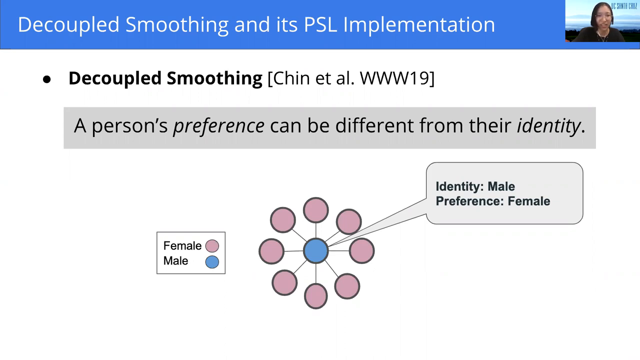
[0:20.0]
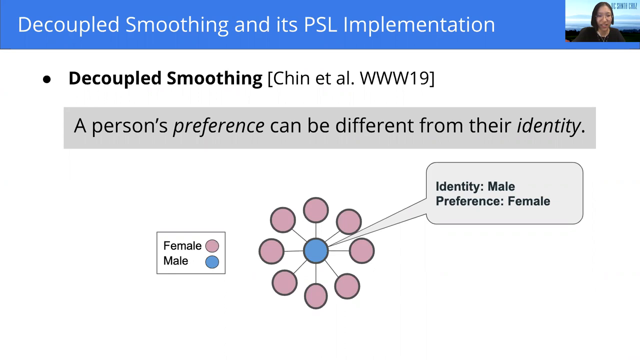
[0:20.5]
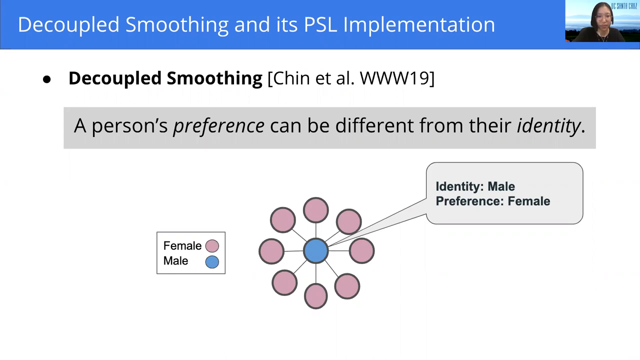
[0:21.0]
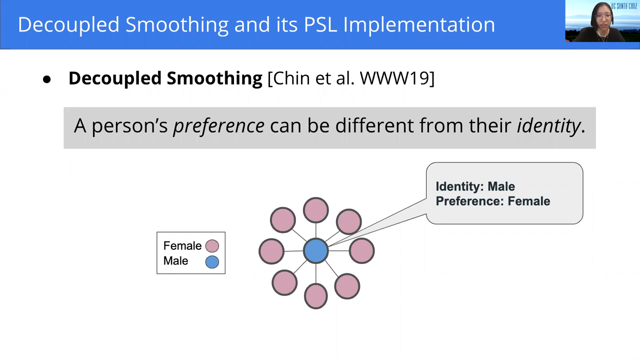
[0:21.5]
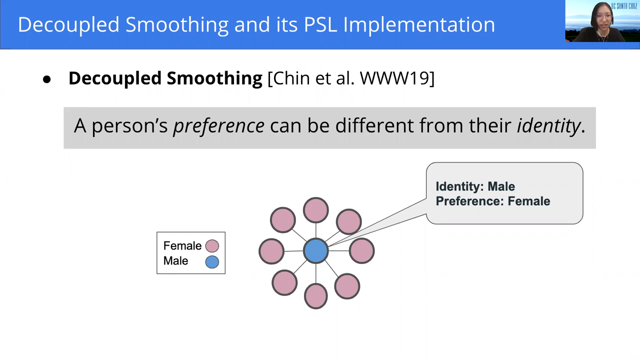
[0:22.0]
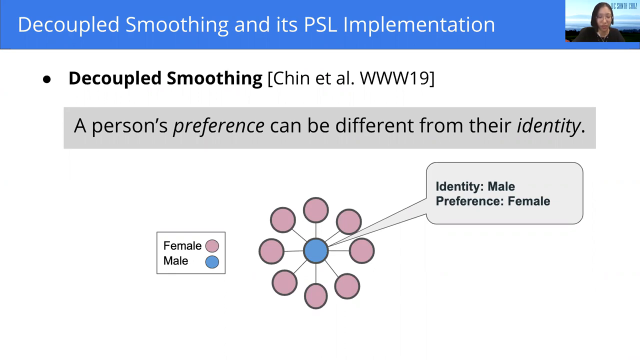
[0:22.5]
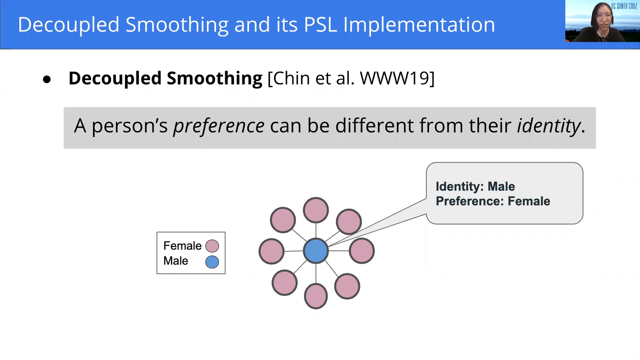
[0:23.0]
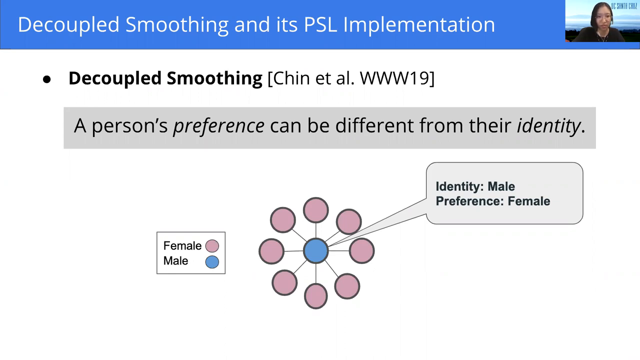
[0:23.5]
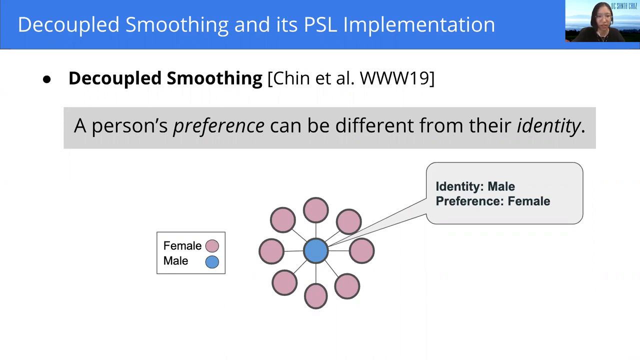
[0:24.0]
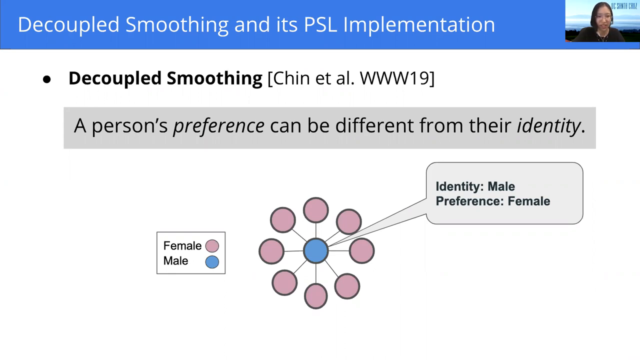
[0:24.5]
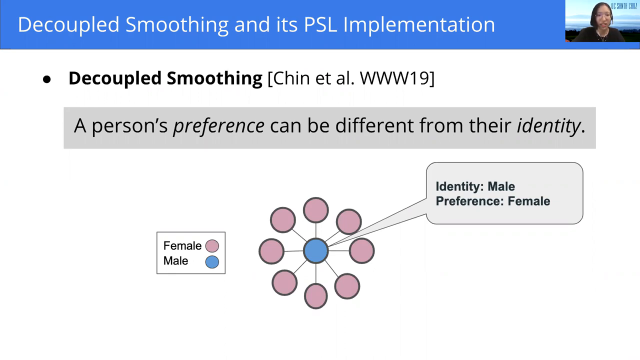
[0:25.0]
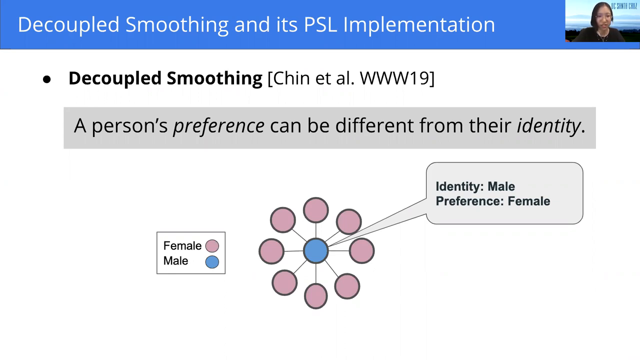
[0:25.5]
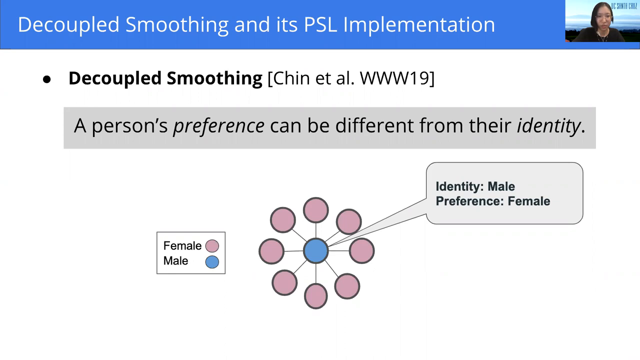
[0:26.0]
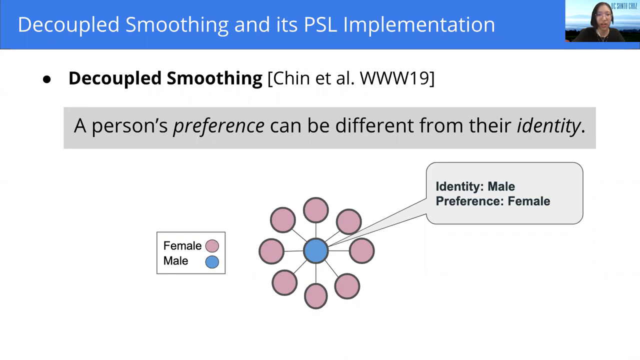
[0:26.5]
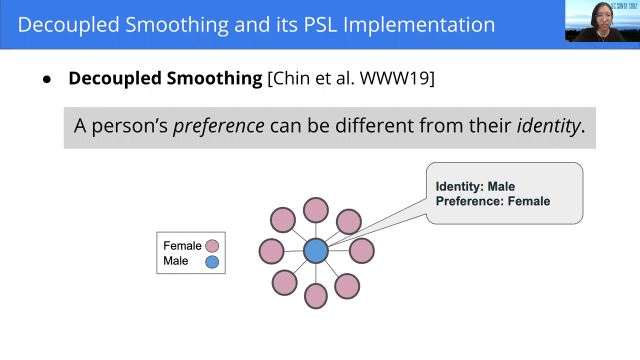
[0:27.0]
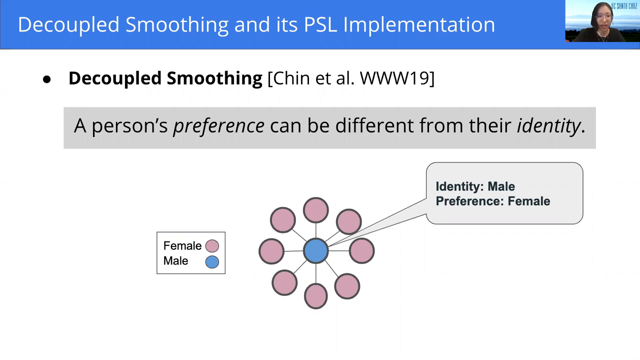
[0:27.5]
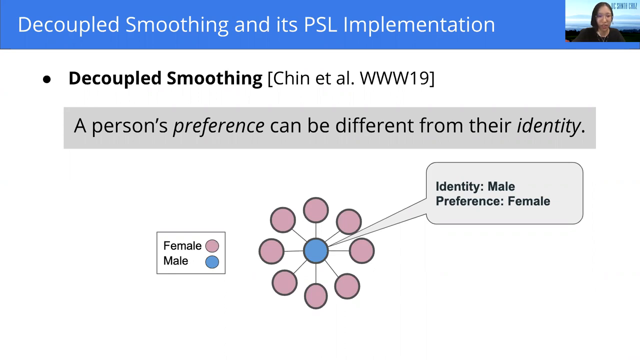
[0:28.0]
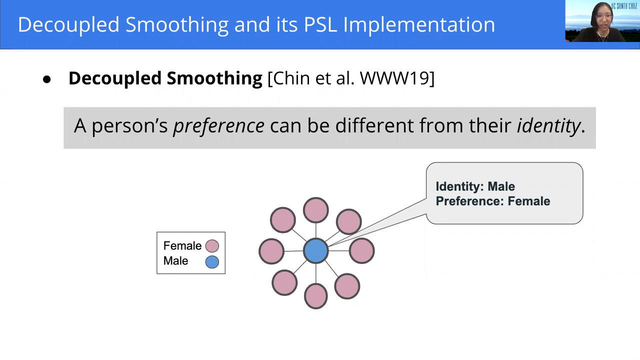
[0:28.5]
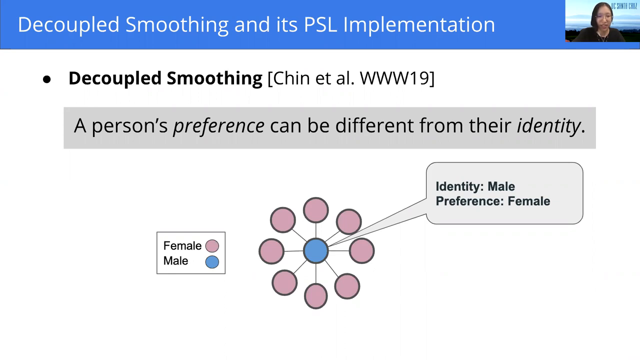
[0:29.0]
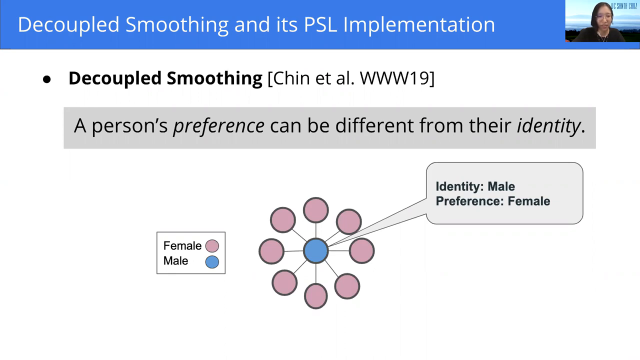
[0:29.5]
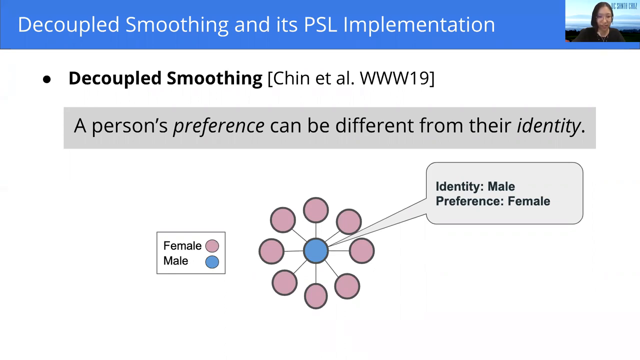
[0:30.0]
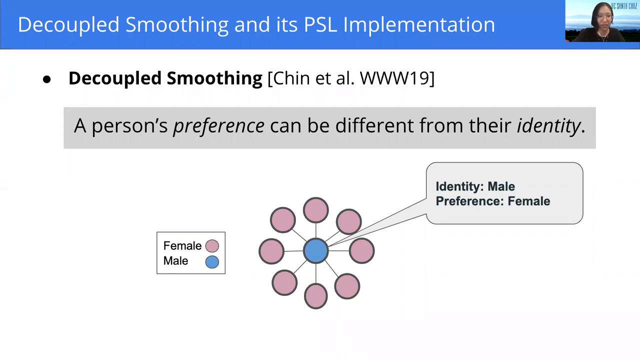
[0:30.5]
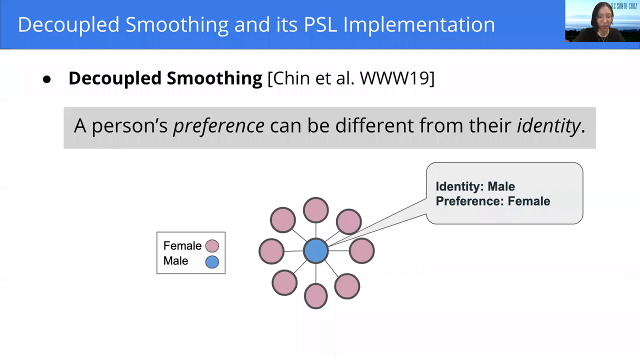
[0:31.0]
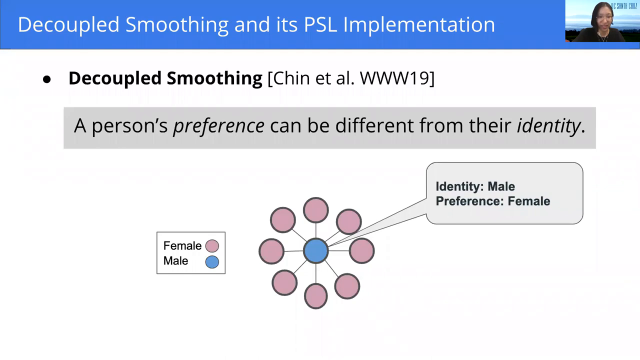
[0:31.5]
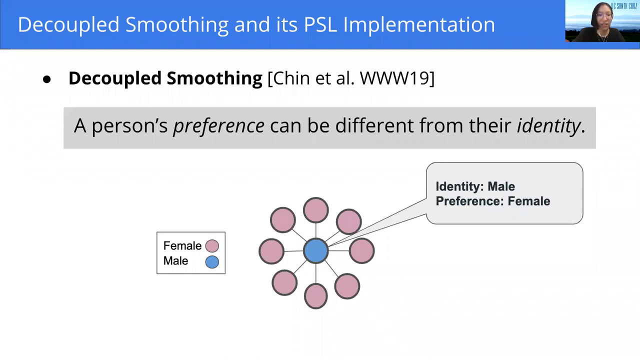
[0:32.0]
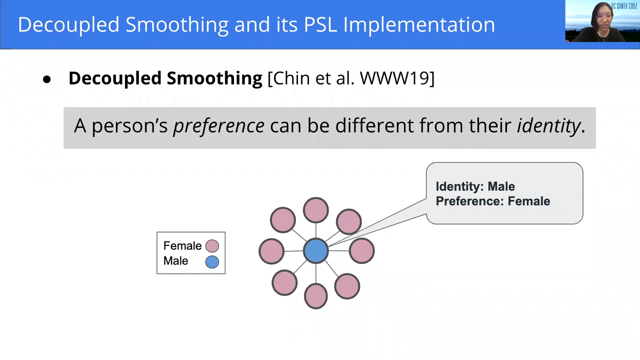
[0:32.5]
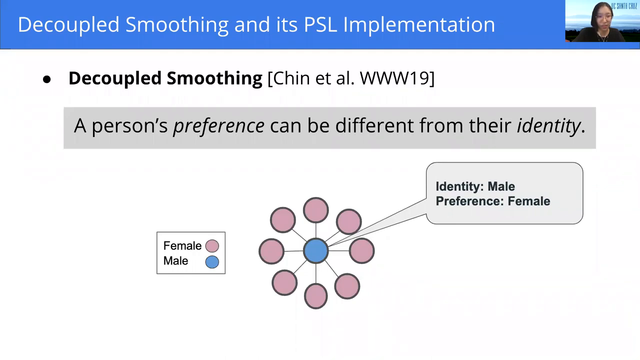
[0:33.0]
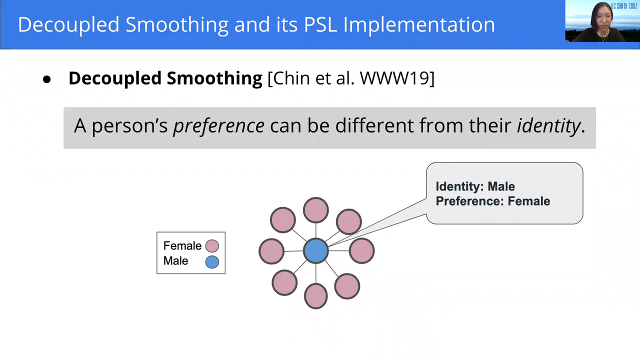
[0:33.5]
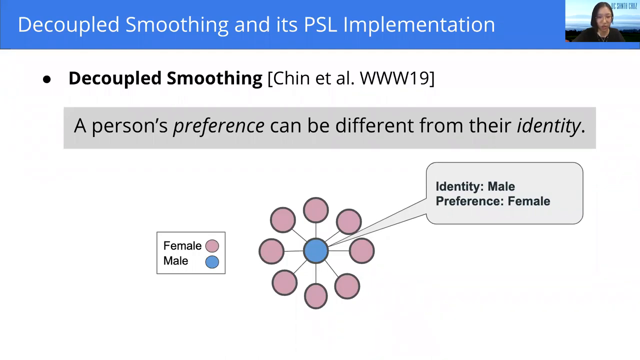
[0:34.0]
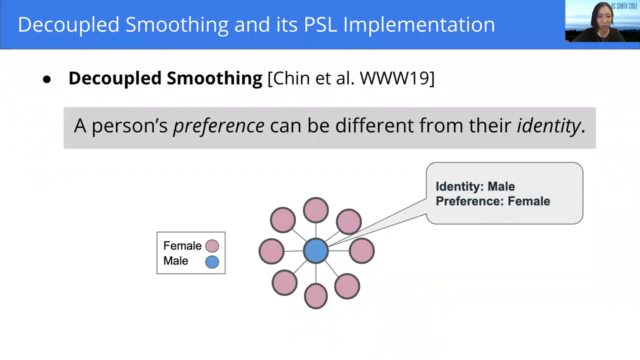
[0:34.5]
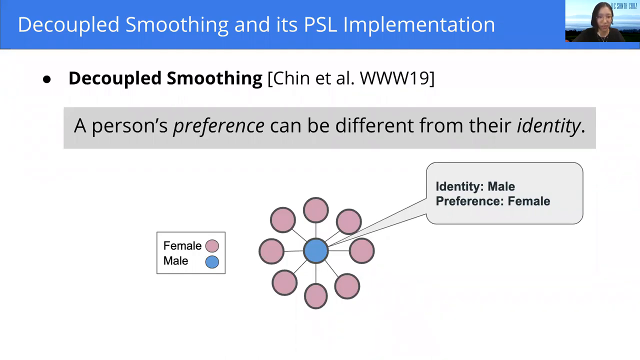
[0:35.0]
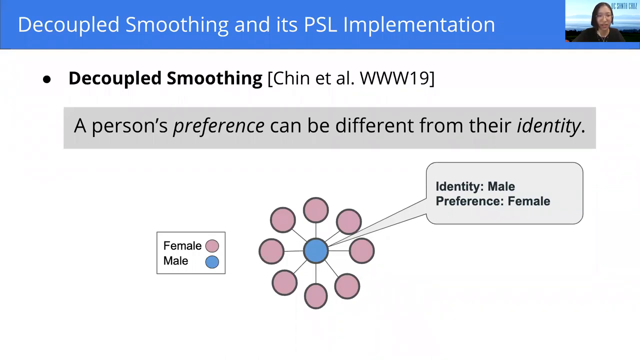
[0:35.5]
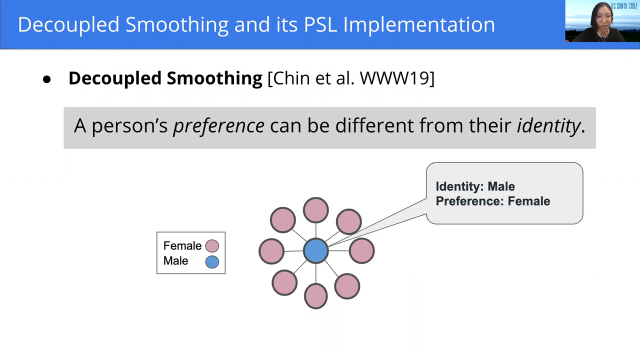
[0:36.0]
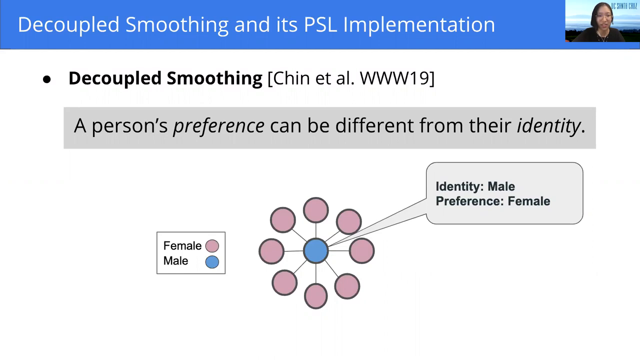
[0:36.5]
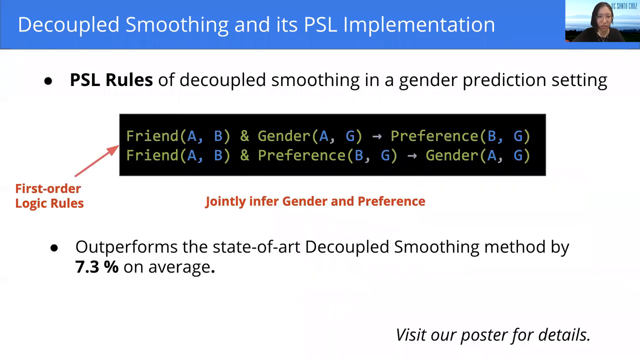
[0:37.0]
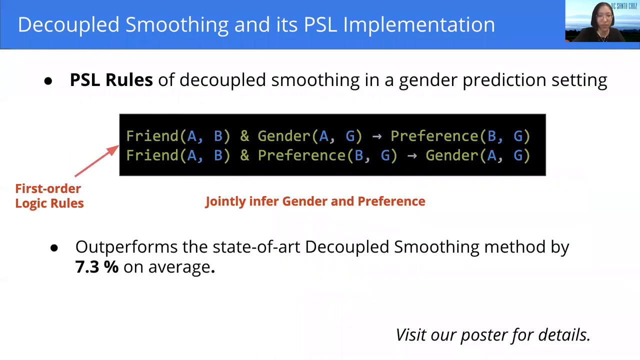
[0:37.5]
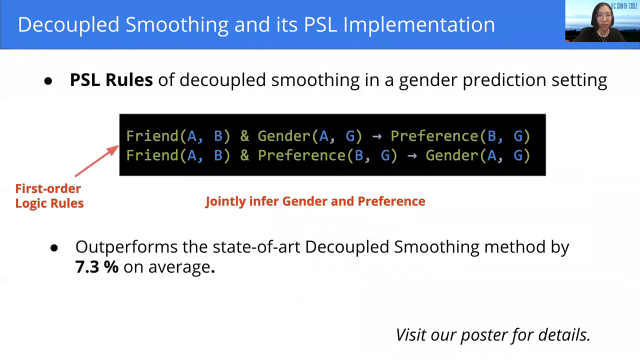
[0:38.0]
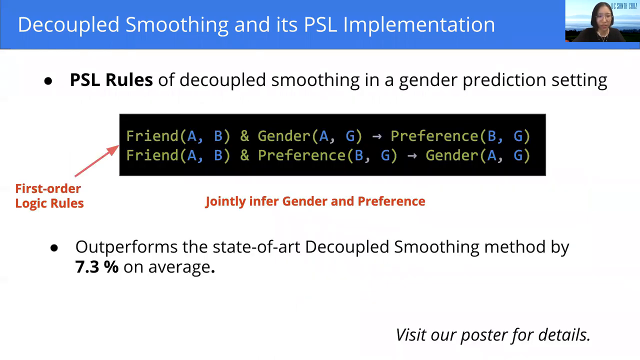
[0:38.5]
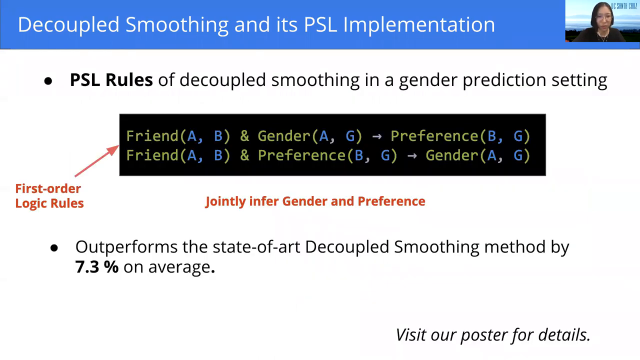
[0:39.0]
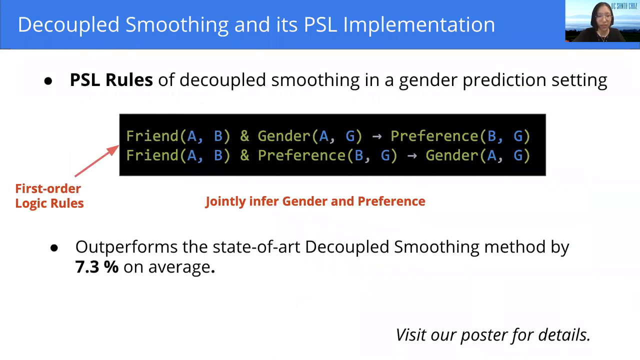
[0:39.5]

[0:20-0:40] The slide titled "Decoupled smoothing and its PSL implementation" reads "a person's preference can be different from their identity" with the labels "female," "male," "identity male," and "preference female." A blue ball is in the middle with pink balls around it; the pink balls are female. The background is white, so the content shows up well. A woman is talking in the top right corner of the screen. The presentation then moves to the next slide, which reads "PSL rules of decoupled smoothing in a gender prediction setting," "friend and gender preference," "friend and preference gender," "first order logic rules jointly infer gender and preference," and "outperforms the state of the art decoupled smoothing method by 7.3% on average." The person appears to be going through a PowerPoint presentation.